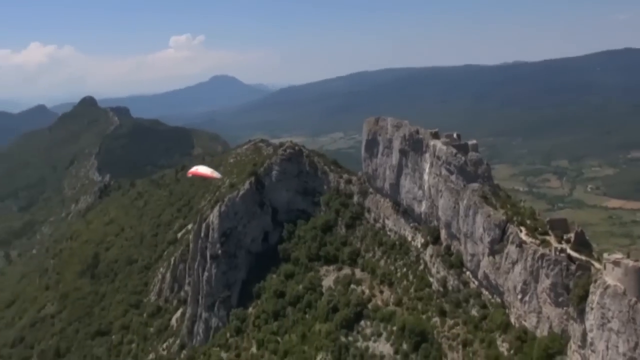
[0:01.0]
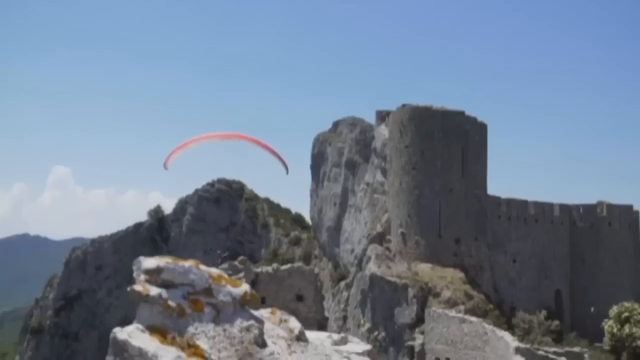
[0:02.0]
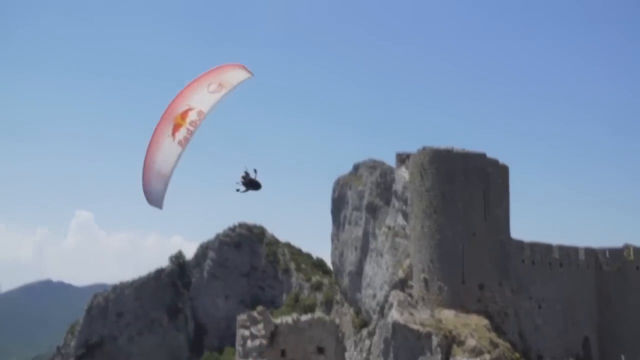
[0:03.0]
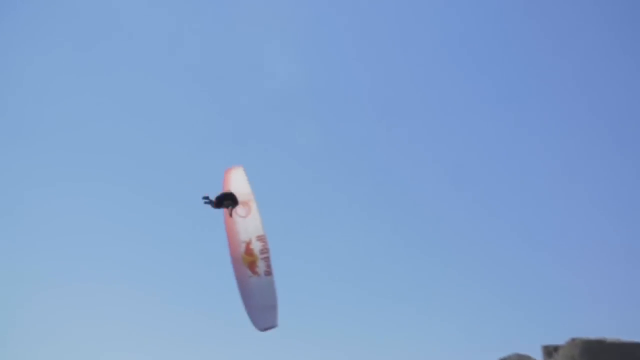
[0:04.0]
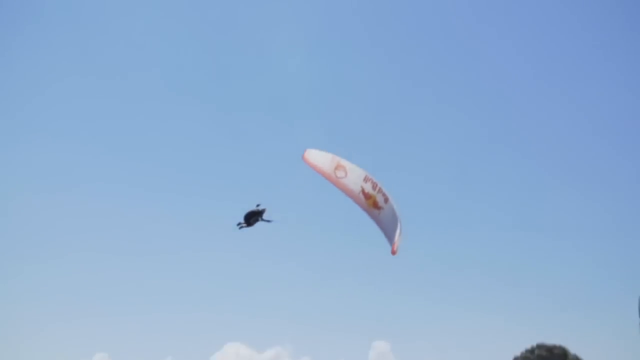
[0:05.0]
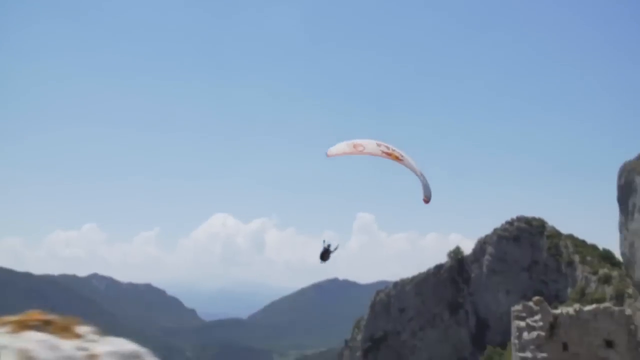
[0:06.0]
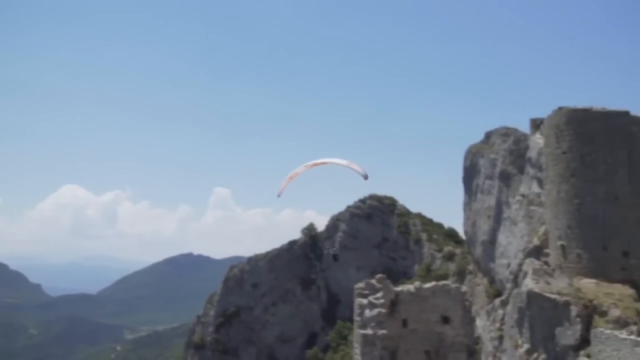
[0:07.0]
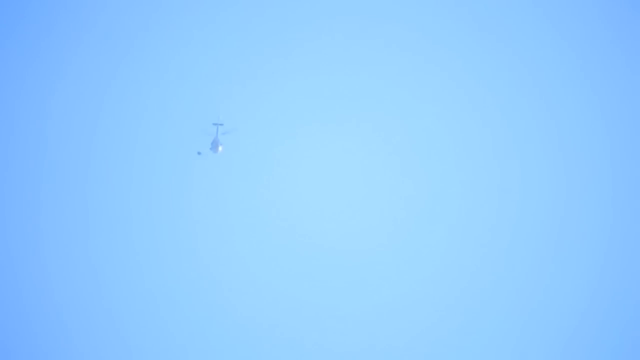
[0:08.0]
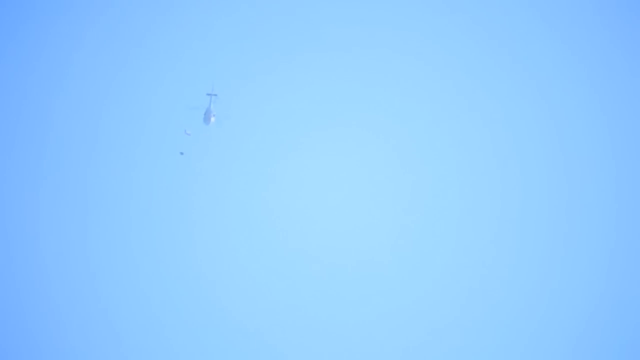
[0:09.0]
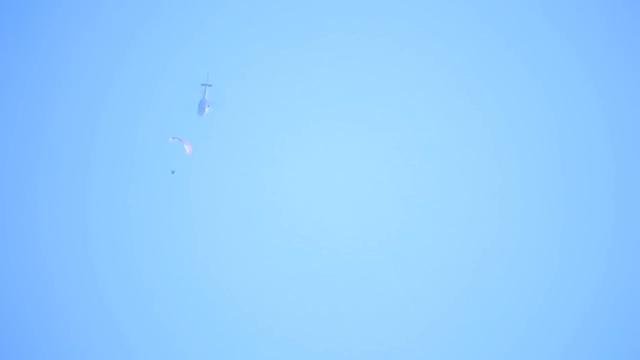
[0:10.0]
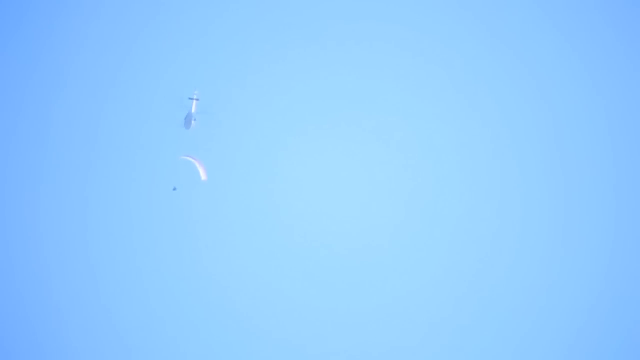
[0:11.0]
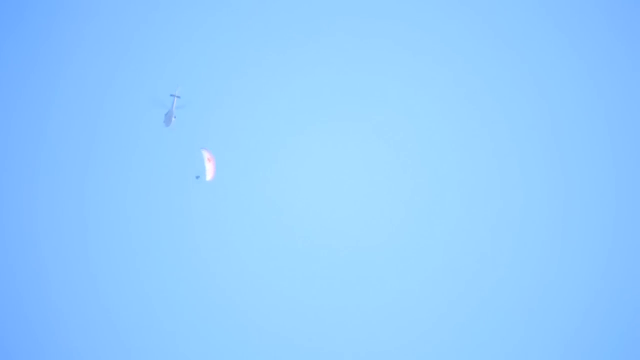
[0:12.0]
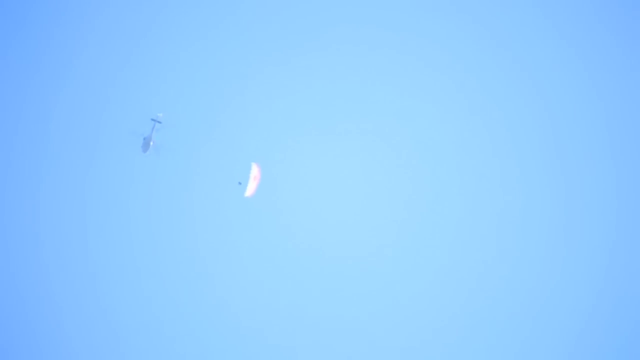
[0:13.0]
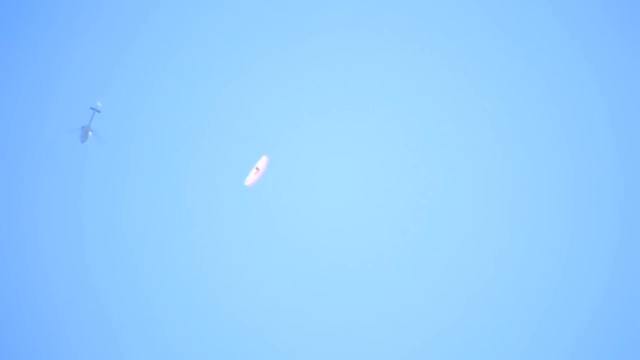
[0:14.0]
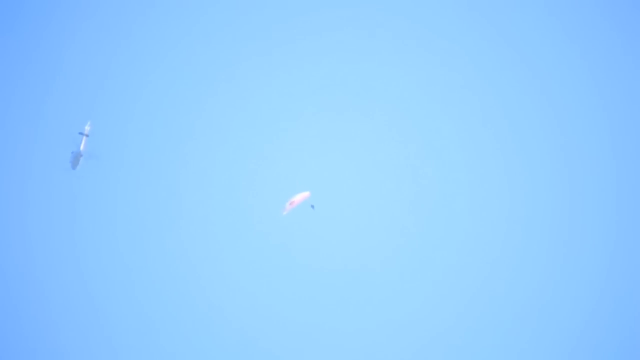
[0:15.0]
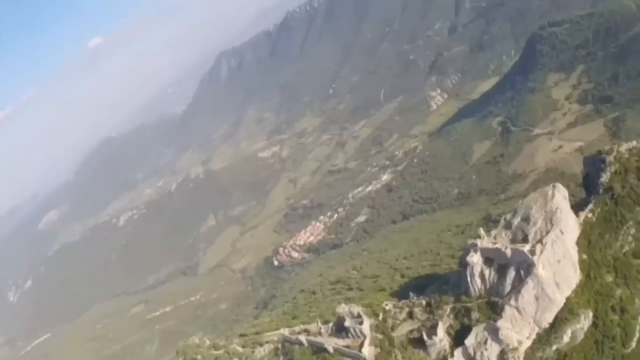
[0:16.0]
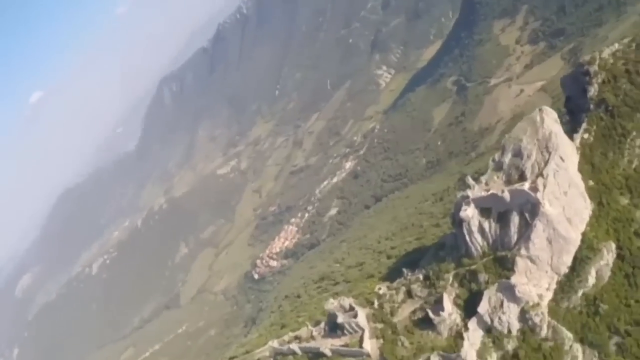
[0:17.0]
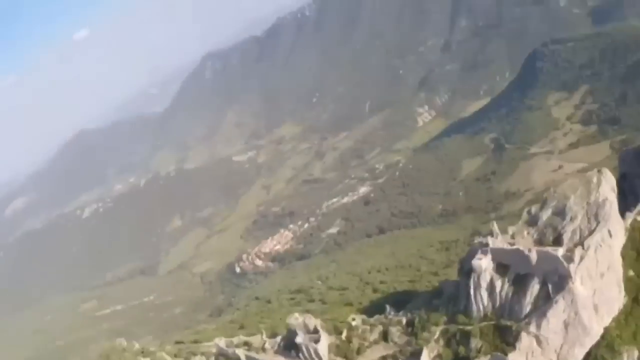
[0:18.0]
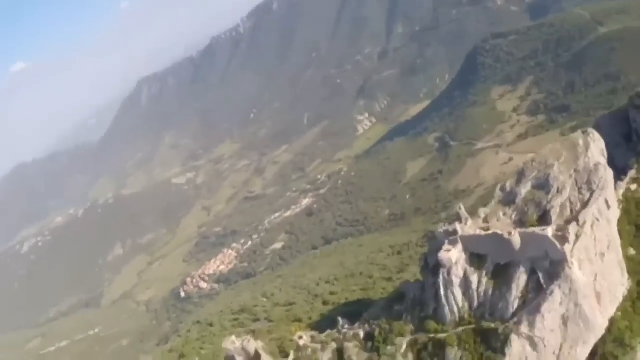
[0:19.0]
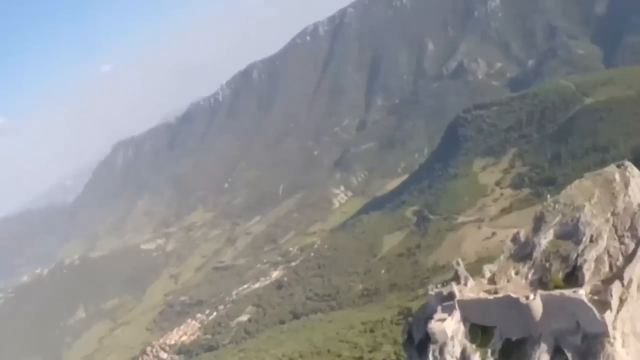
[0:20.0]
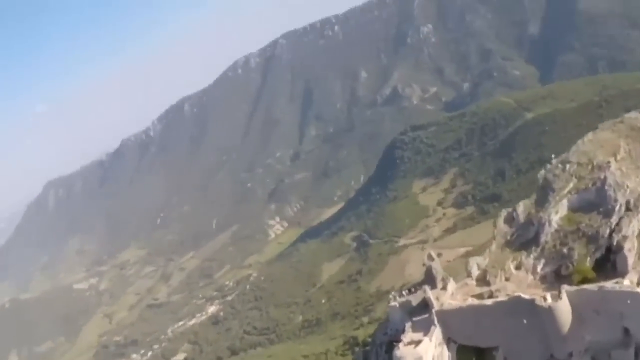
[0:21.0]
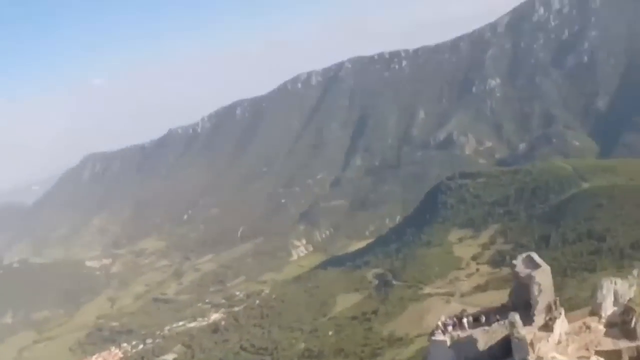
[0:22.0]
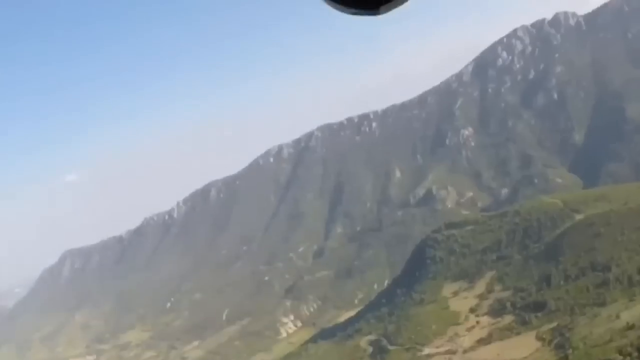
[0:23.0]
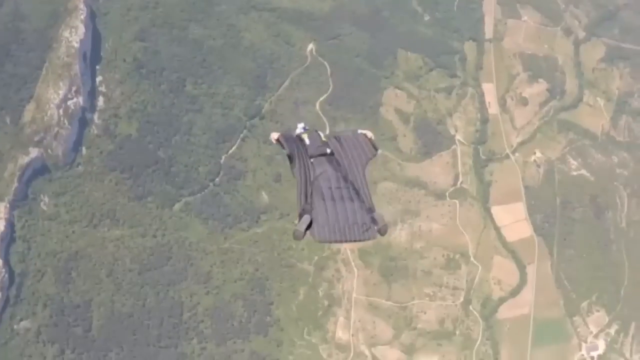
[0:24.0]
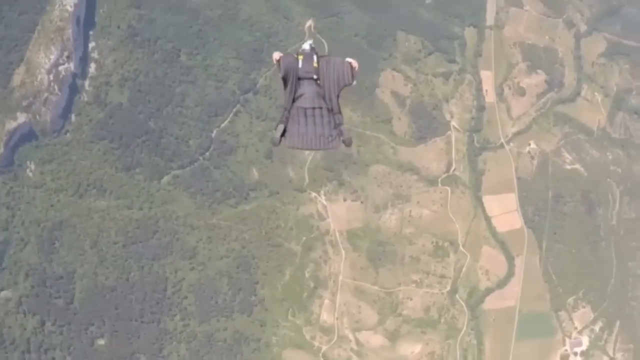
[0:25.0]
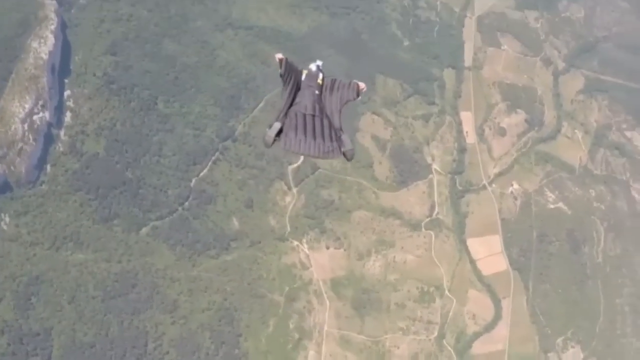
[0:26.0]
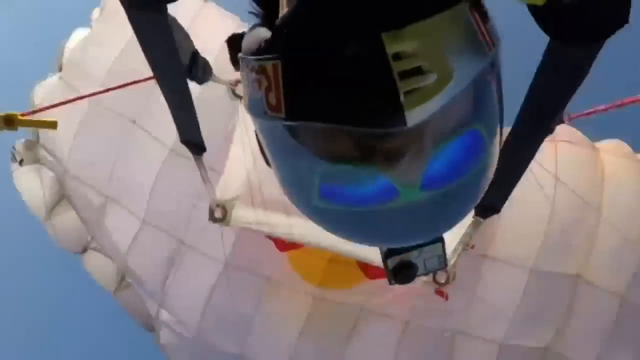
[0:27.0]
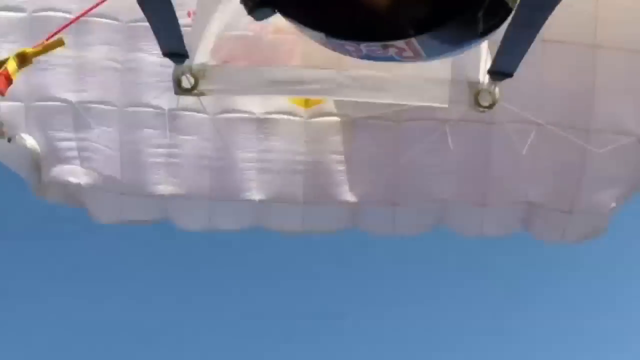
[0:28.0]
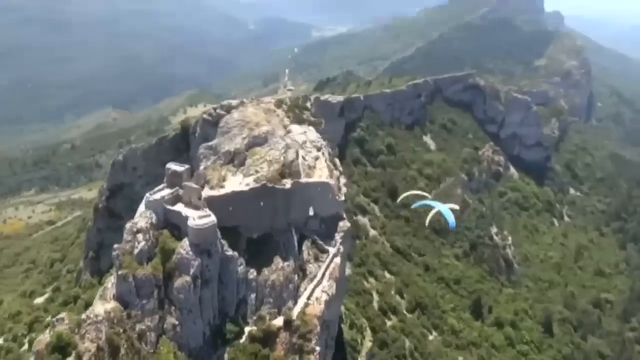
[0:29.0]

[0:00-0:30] Someone is paragliding. The video opens overlooking a mountain from up high. A big rock structure comes in from the bottom right corner, angling up just past the center as it rises about a third of the way to the left: a huge gray wall with a little bit of green on the side going off to the right. Below it, another small peak comes up in the center and goes down. A rock structure extends toward the camera, with trees under it and trees down the side. Big mountain ranges are in the background, with mostly blue skies on the right side and heavy cloud coverage on the left. A paraglider is just left of center. The view then zooms in close from ground level. A couple of big rocks are at the bottom, and what looks like some sort of stone building is built into the side of the mountain on the right side, coming in about halfway. The paraglider's canopy is red and white, with the Red Bull logo and "Red Bull" written underneath it, seen a little from underneath. The body goes up to the left, and then only sky is visible. He kind of flips around and heads back toward the right, toward the rock structures. Against a light blue sky, a helicopter is visible way up as a little dot. The man is coming down; the paraglider is a little dot descending to the left. The view then switches to the paraglider's point of view as he comes down: rocks run across the bottom edge of the screen, with green trees and rolling hills in the distance and a big mountain. He comes down close to the rock structure, and people are standing on top of one portion off to the right. Next, someone in an all-black suit with flaps out for the arms and legs, like a bat, is seen from behind, looking up. Then the view is from underneath a man, looking up at his mask and the bottom of the paraglider. Three of them are then next to the rock structure on the right side.